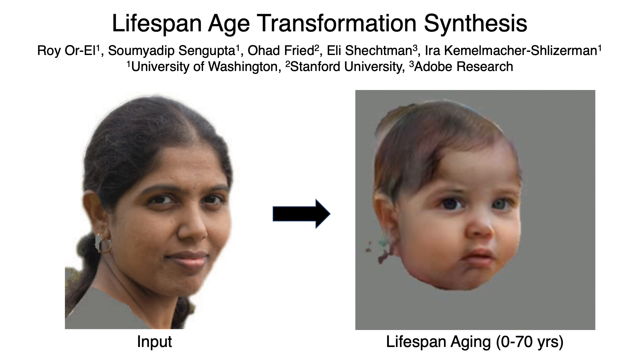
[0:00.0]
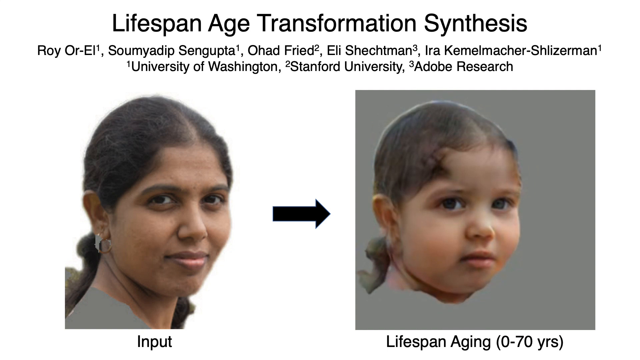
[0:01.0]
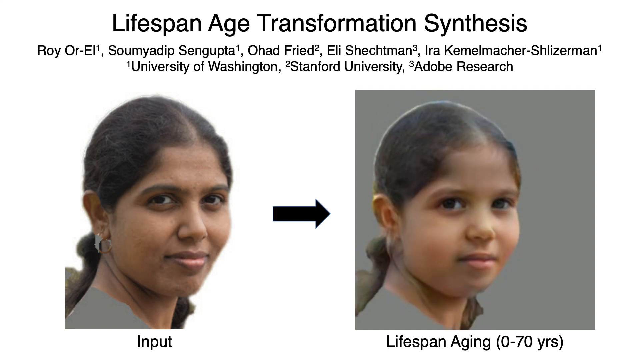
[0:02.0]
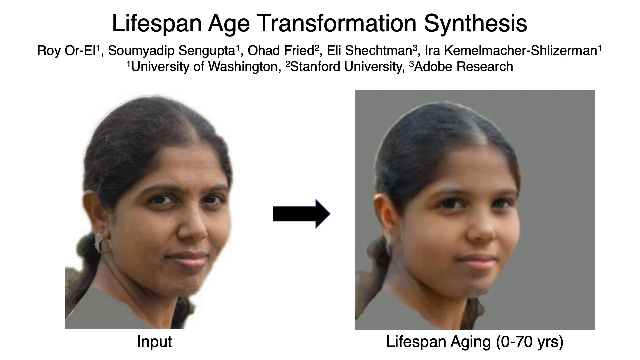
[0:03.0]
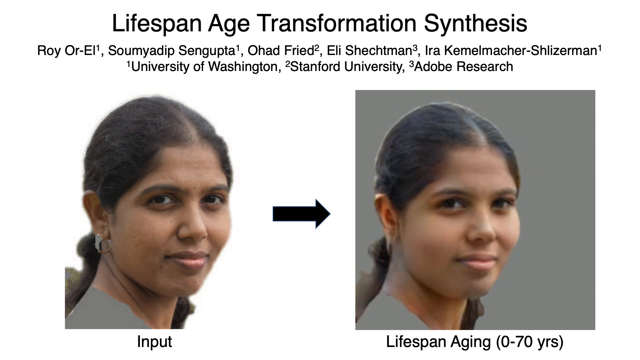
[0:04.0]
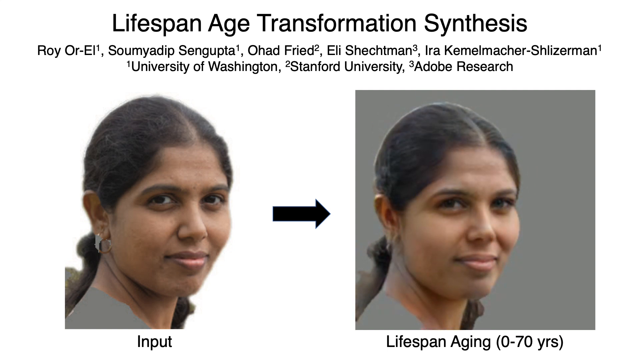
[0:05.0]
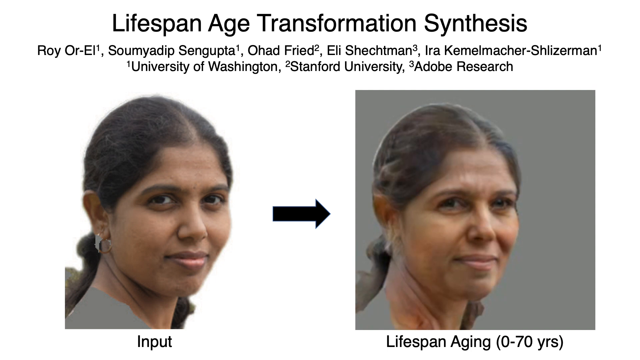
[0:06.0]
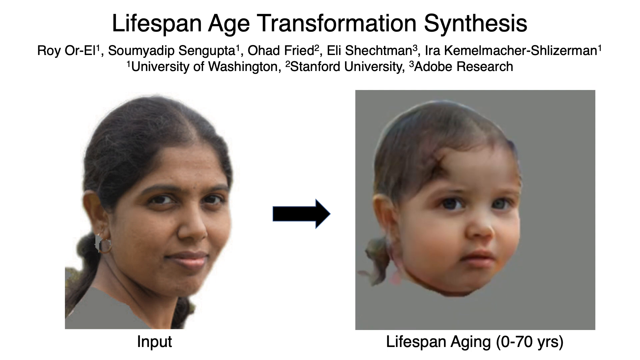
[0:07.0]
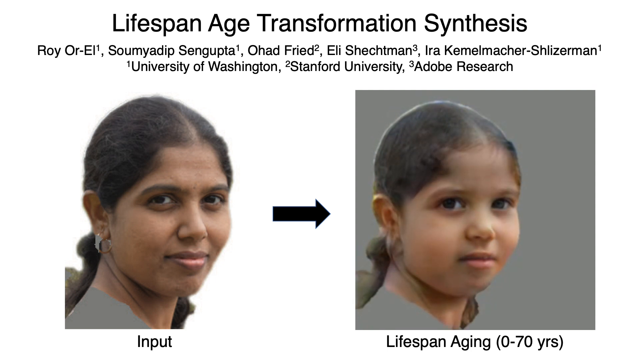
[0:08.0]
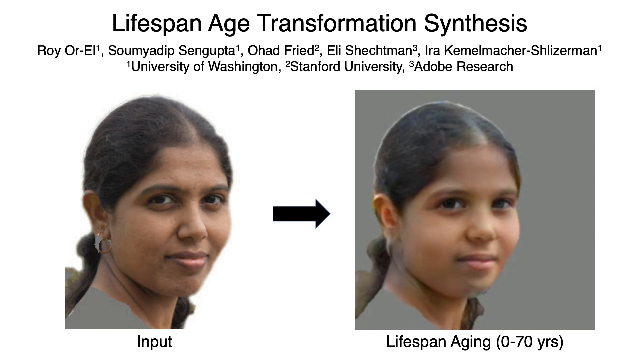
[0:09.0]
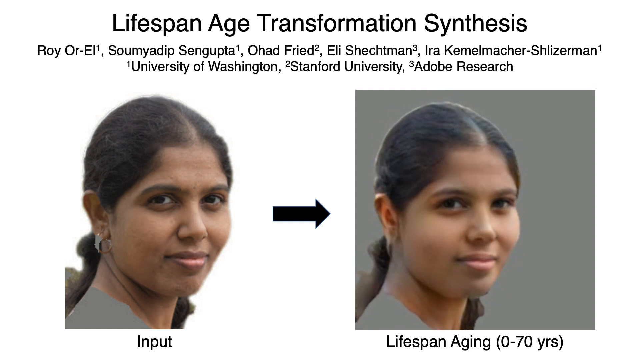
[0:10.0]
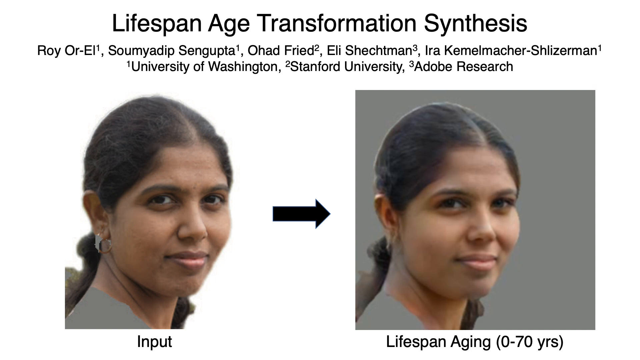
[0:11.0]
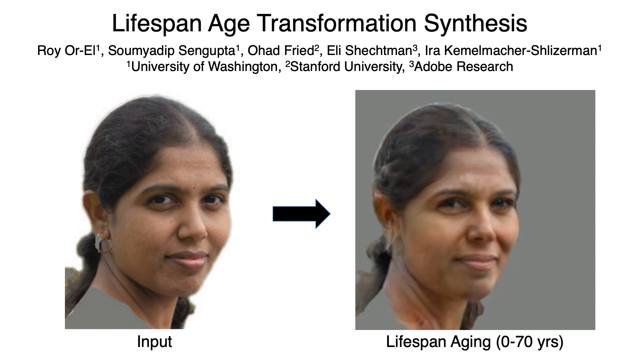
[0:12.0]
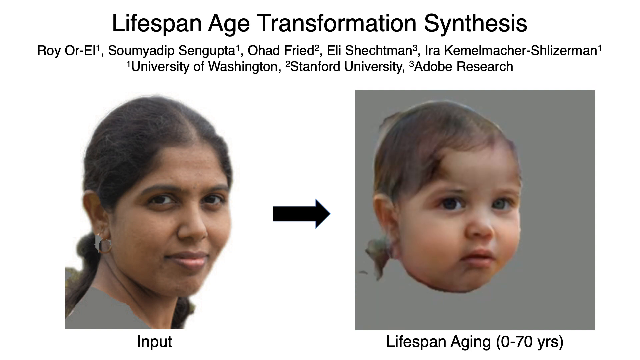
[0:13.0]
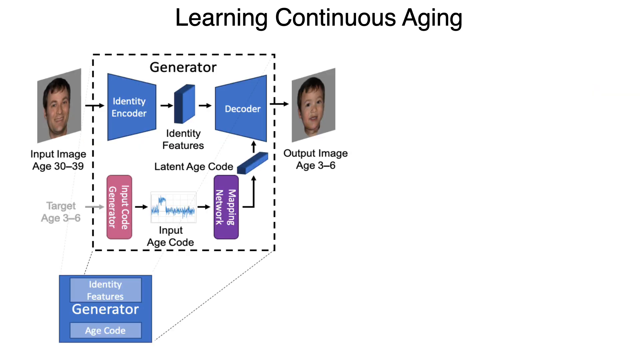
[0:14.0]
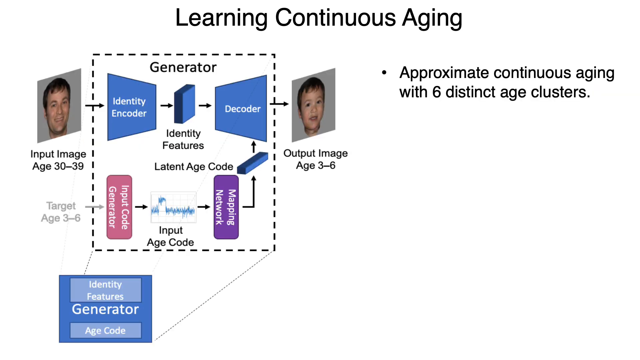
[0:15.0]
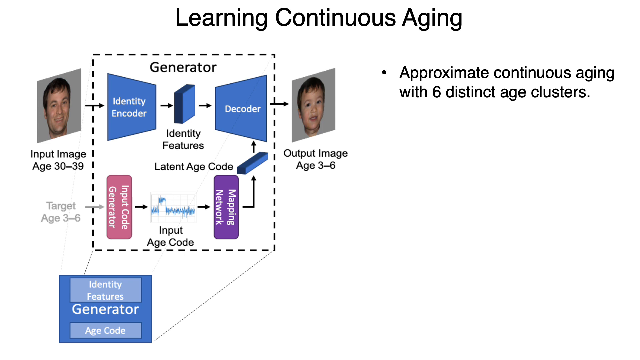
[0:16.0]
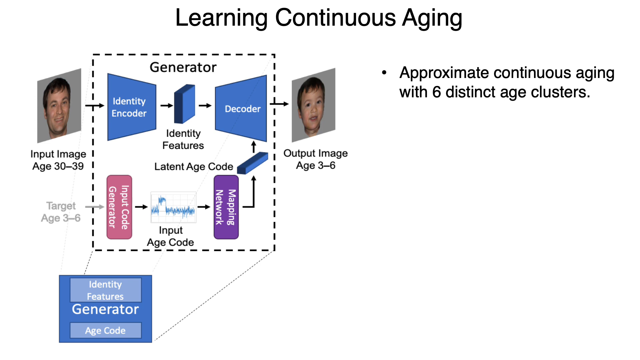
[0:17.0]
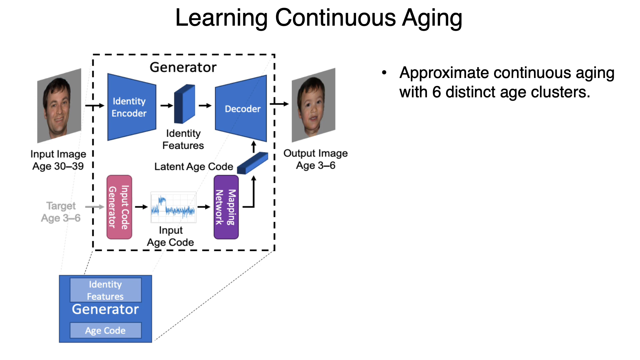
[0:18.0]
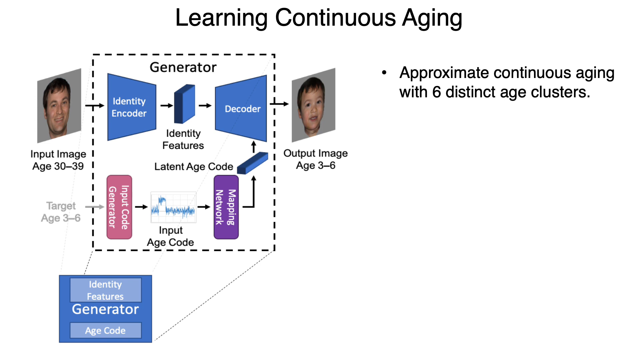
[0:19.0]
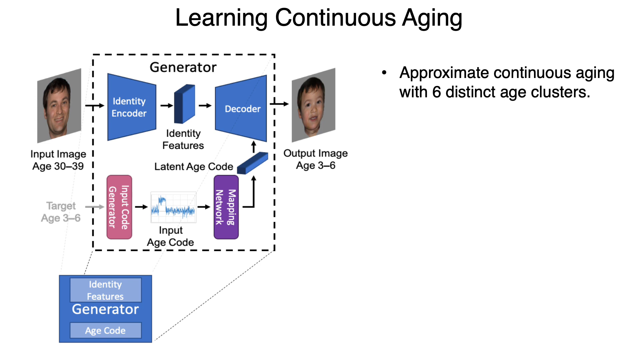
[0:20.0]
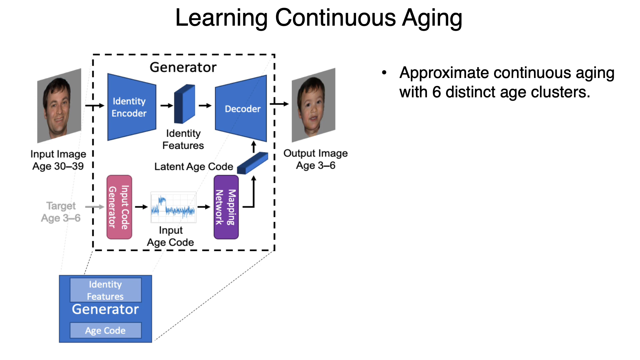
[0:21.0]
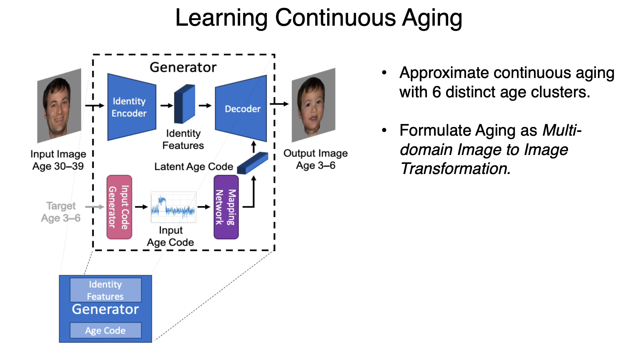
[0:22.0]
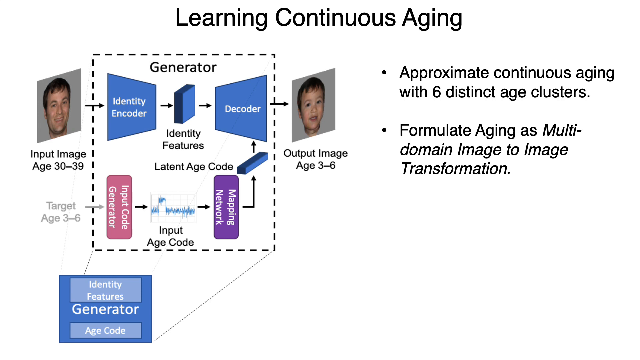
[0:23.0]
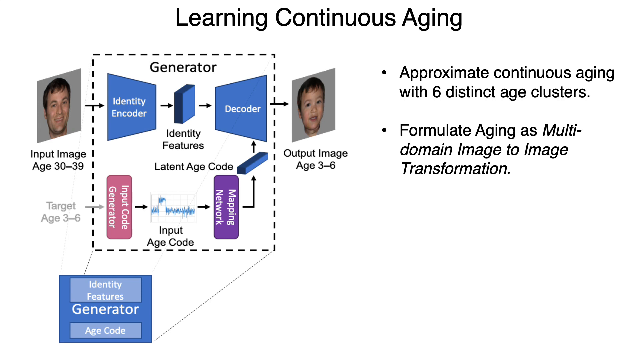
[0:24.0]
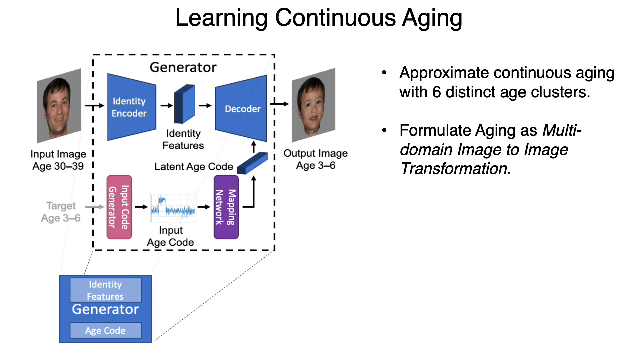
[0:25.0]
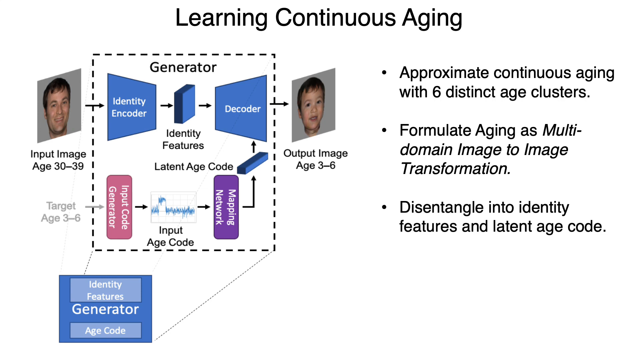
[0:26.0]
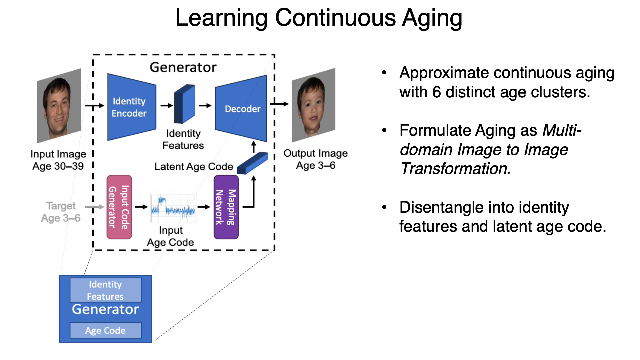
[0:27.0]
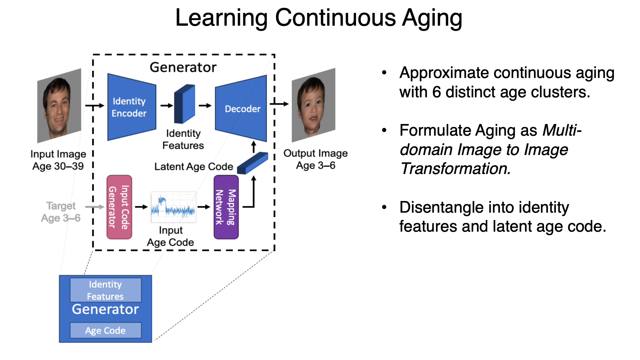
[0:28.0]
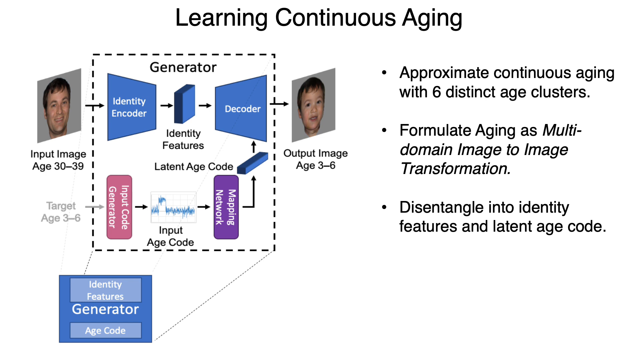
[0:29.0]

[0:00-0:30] The video is laid out like a PowerPoint presentation. On a blank white background, text at the top of the screen reads "Lifespan Age Transformation Synthesis," subtitled with names and "University of Washington, Stanford University, Adobe Research." On the left is an image of an adult woman, and on the right there seems to be a computer-generated image of a baby, just its face. The baby image begins to grow and age slowly, going from a baby to match the adult woman on the left. This happens multiple times, and then the slide changes to one labeled "Learning Continuous," showing a chart. A picture of a full-grown man's face appears above "input image age 30 to 39." An arrow points to a box that reads "Identity Coder," and another arrow points to a box in the center labeled underneath "Identity Features." Another black arrow points to the right and reads "Identity Coder." In a dashed box labeled as the generator is an output image, age 3 to 6, of a little boy, just the head, with "Target age 3 through 6." An arrow from it points to "Input Code Generator," then an arrow to the right leads to "Input Age Code," and another arrow to the right points to a box saying "Mapping Network." An arrow points upward to "Latent Age Code," and another arrow pointing up leads to "Decoder," which leads to the little boy's face outside the generator. Bullet points then appear one at a time: "approximate continuous aging with six distinct age clusters," "formulate aging as multi-domain image to image transformation," and "disentangle into identity features and latent age code."